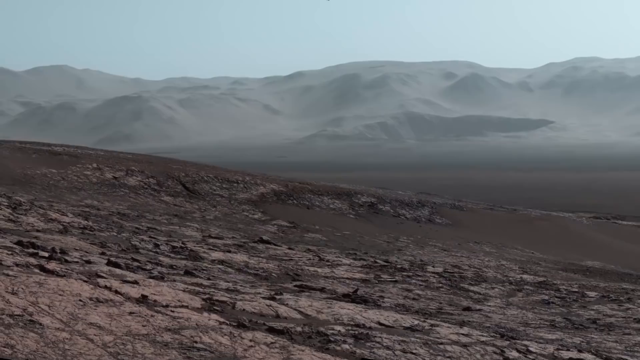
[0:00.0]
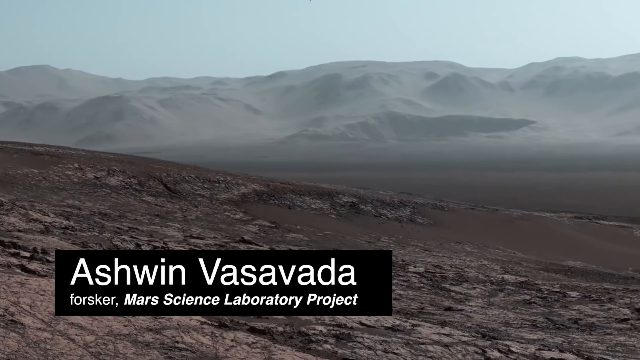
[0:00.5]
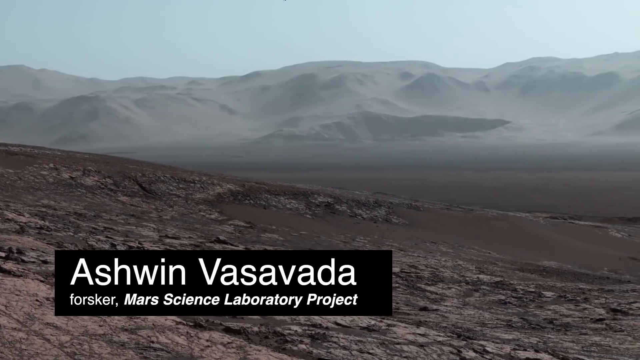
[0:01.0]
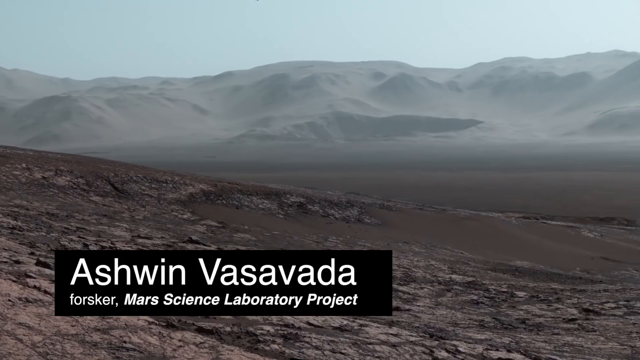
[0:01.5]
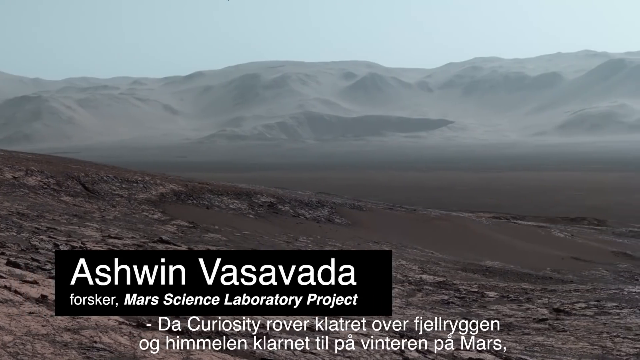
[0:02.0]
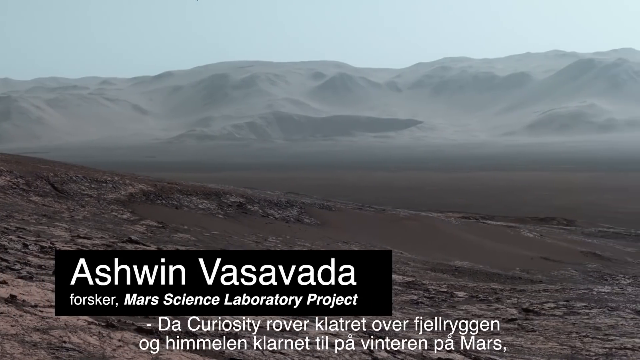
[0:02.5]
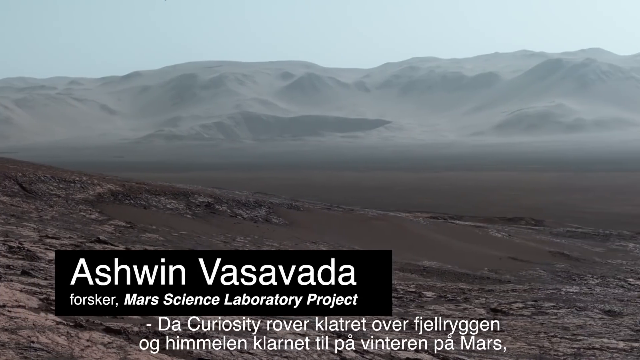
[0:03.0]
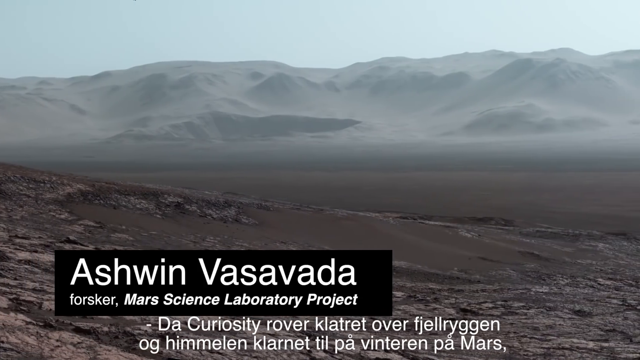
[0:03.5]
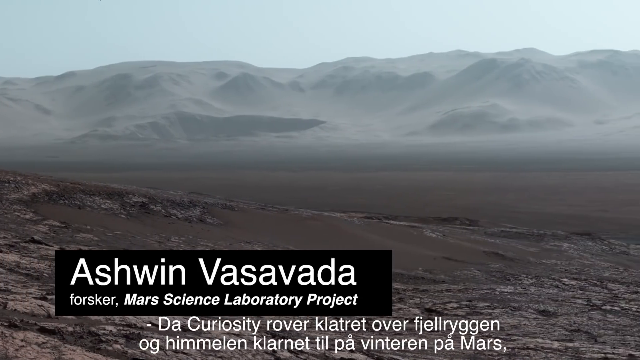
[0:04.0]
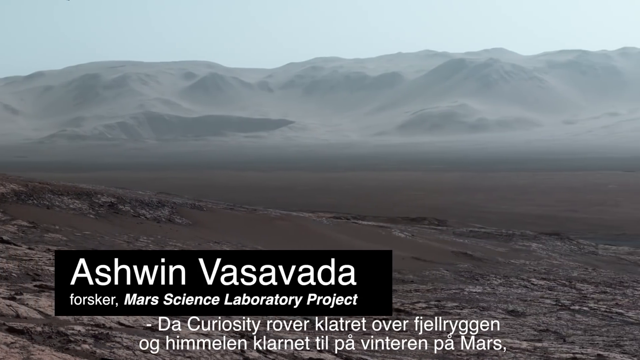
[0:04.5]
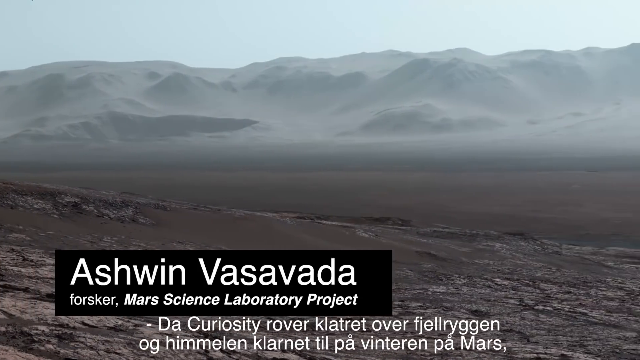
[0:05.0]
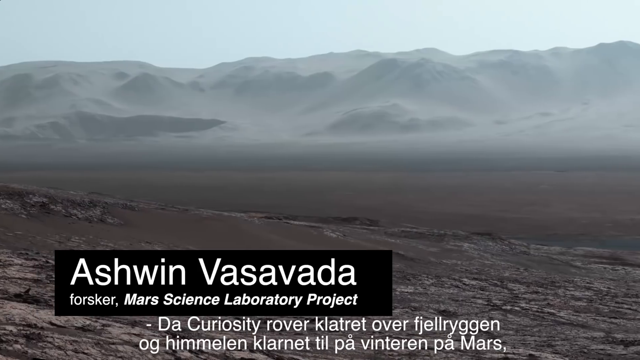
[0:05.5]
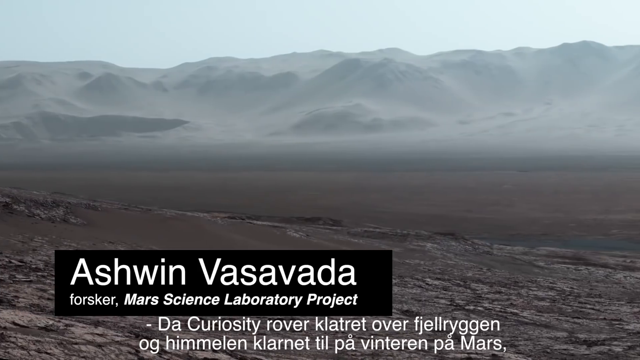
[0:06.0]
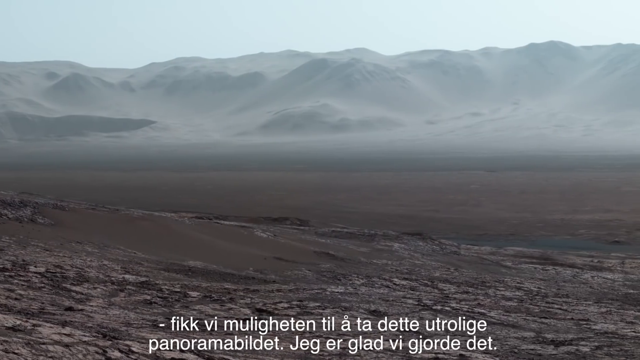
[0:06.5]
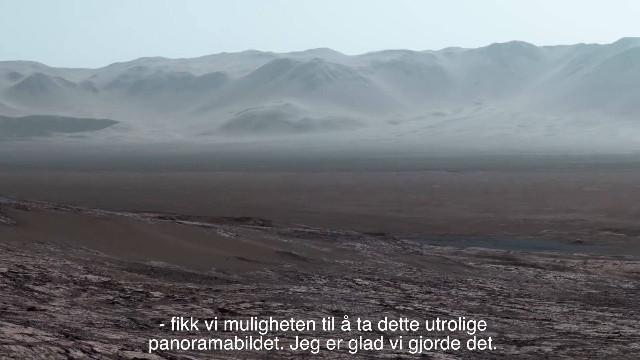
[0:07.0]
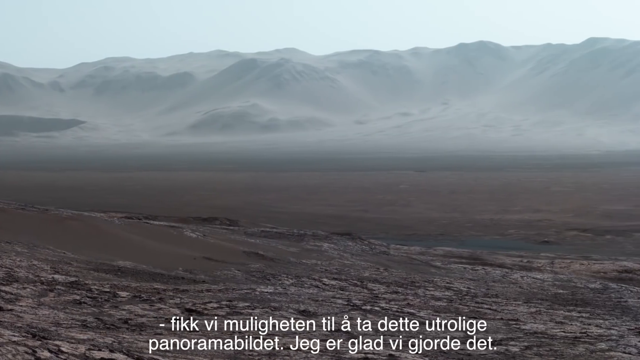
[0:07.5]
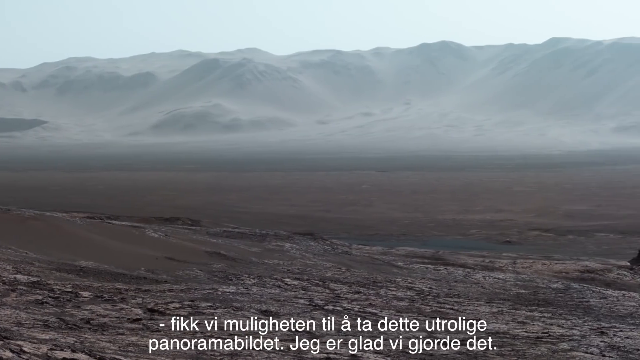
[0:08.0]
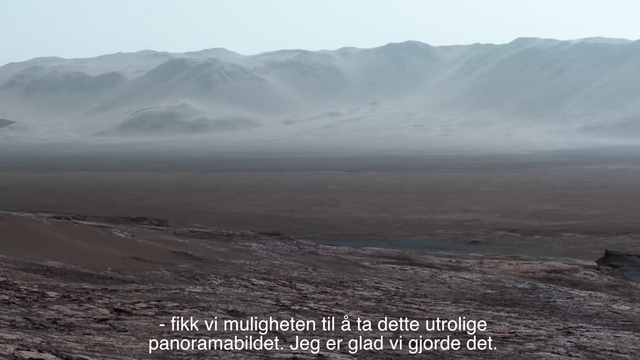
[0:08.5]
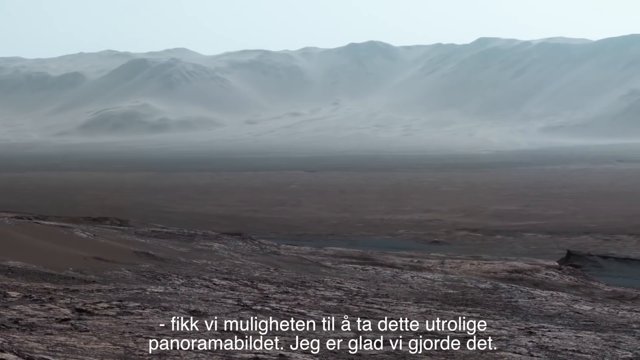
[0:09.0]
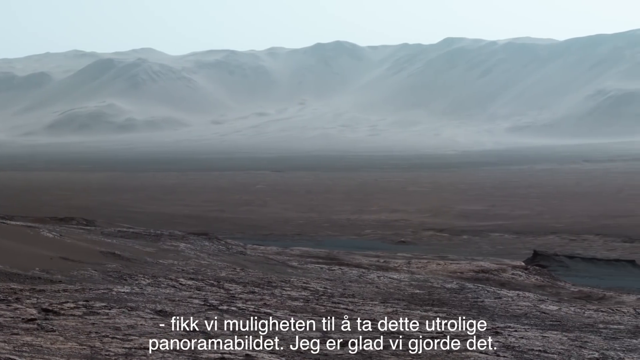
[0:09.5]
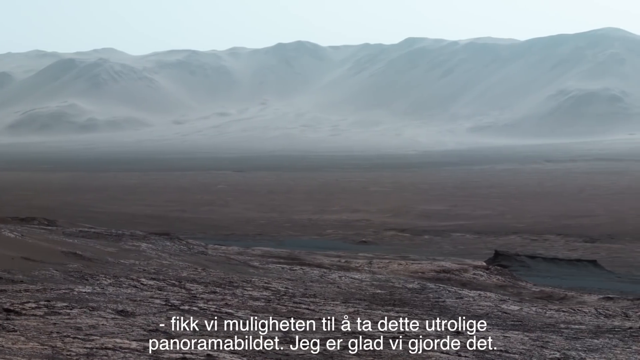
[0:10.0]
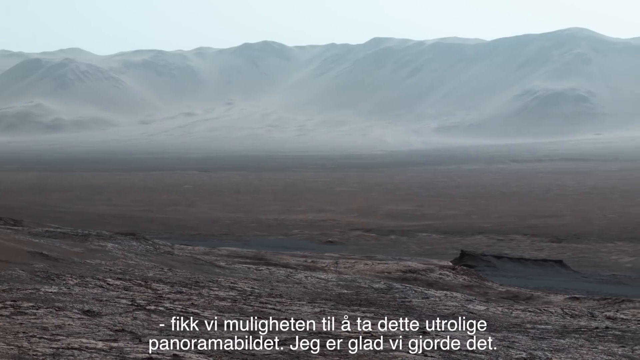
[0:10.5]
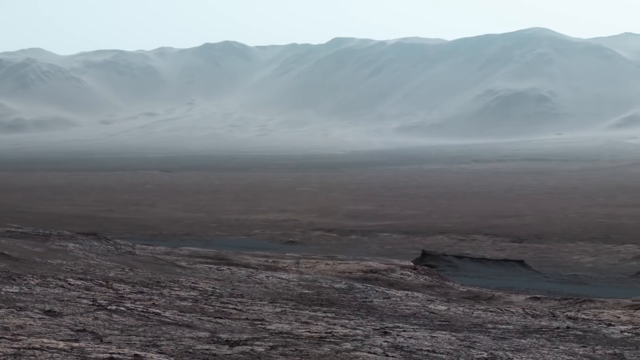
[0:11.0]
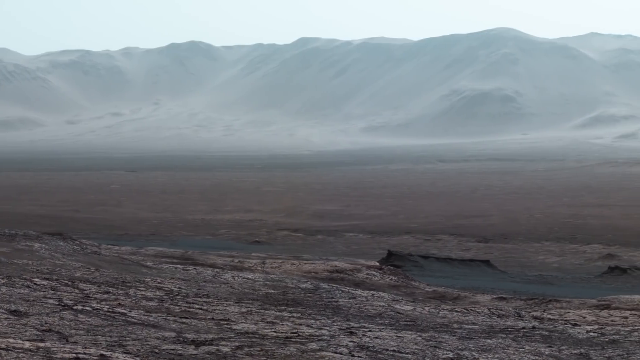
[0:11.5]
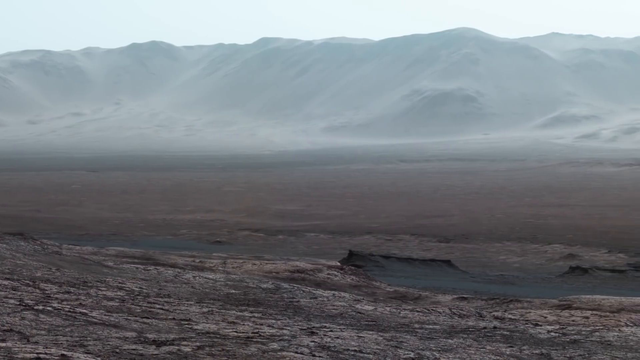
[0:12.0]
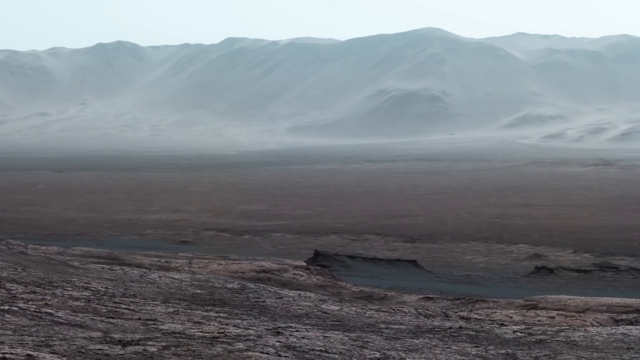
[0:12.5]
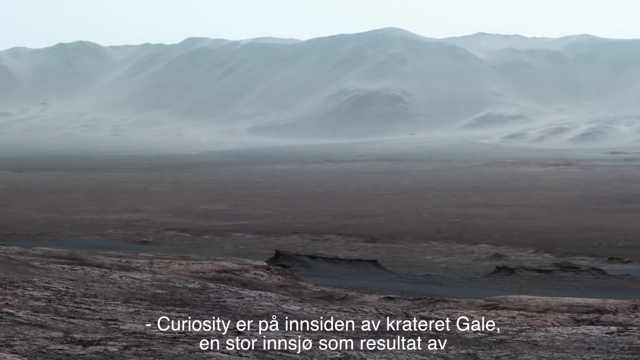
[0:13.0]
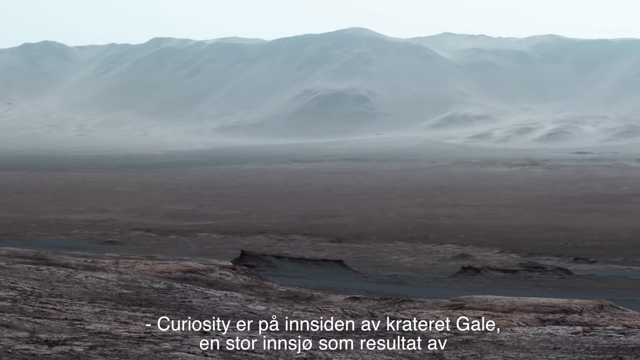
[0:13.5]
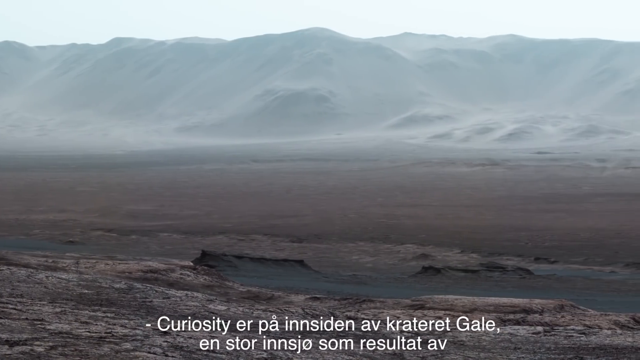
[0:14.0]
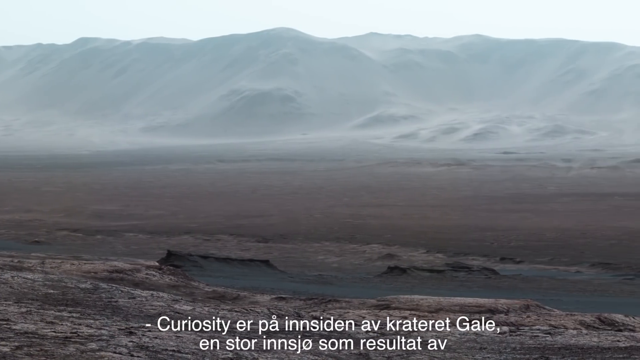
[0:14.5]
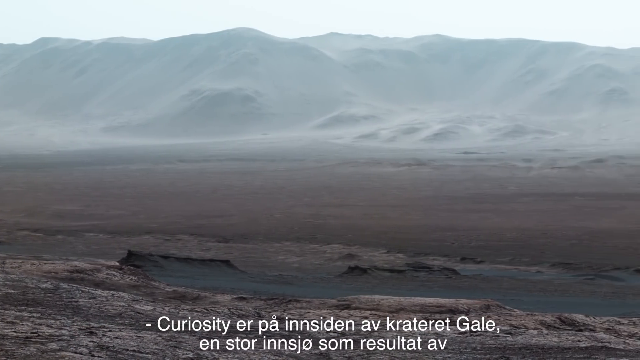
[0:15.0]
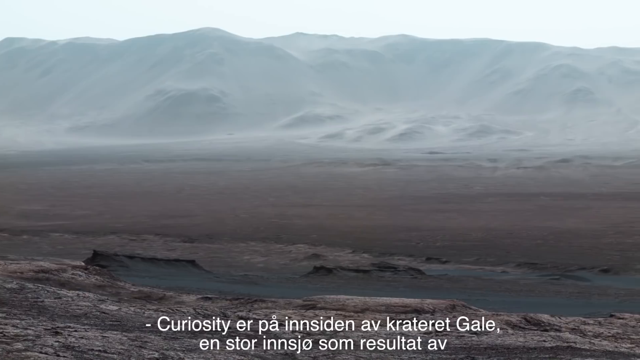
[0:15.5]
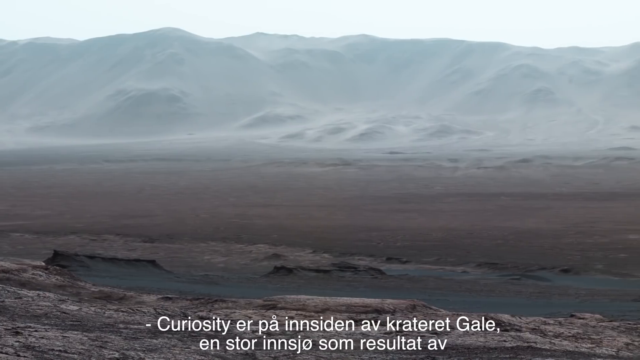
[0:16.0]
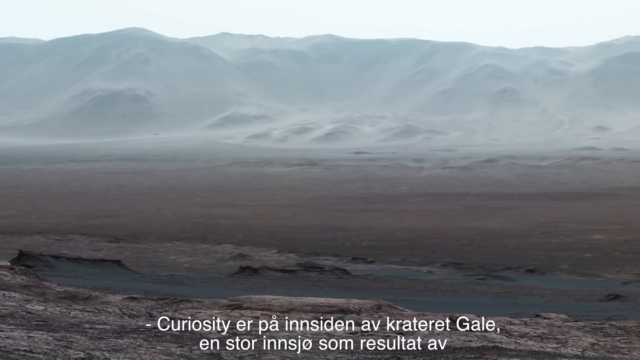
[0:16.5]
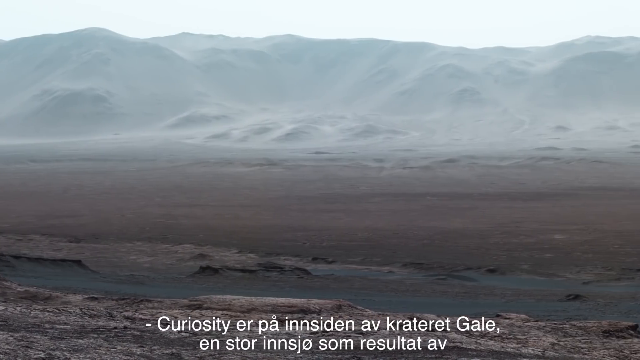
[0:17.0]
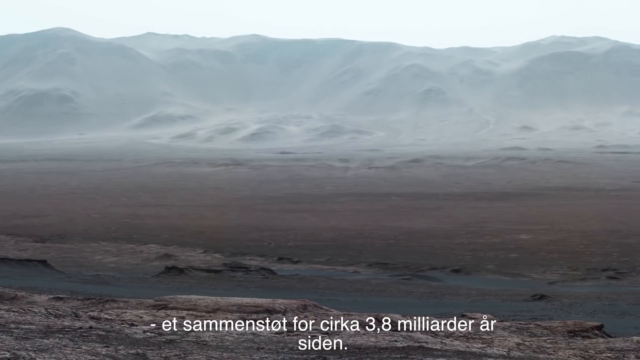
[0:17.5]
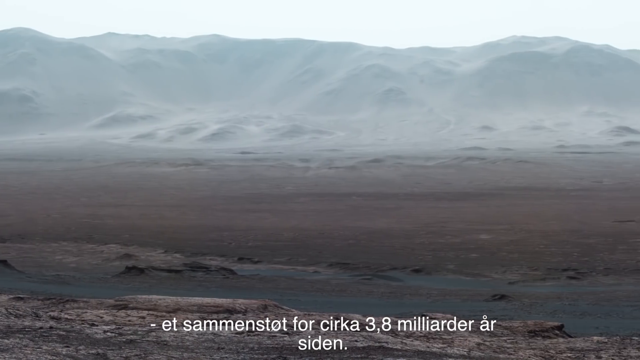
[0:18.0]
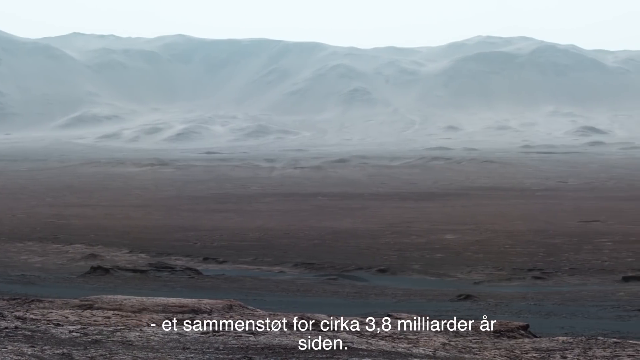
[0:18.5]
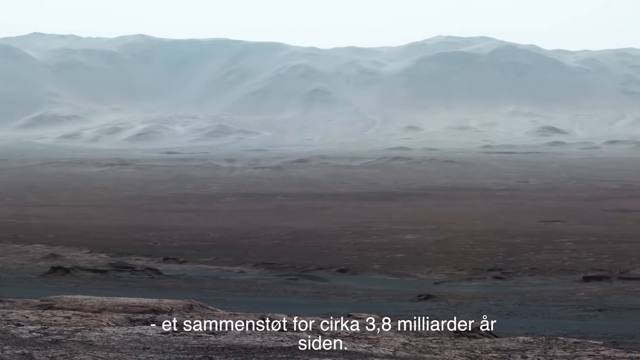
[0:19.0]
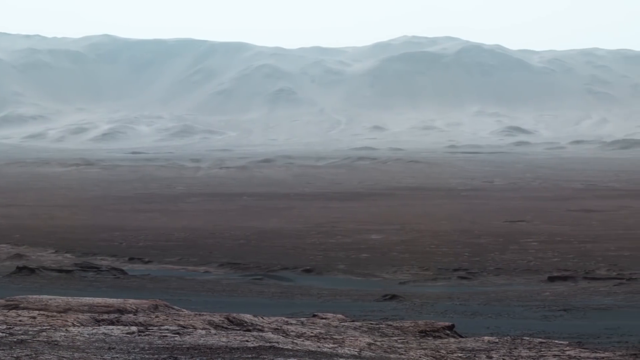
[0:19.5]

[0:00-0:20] A mountainous area appears, with ground covered in dirt, mud and water, and a bit of what seems to be mist or fog under a slightly blue sky. The camera moves to the right, and a black box with white text reads "Ashwin Vasaveda Forsker Mars Science Laboratory Project". White text in another language pops up at the bottom of the screen, with English beneath it. The camera continues moving right, revealing more of the mountainous area, which has some white and blue color to it. Some areas of the ground look like they have holes in them, and the white text keeps popping up on the screen. The mountains have almost an ashy color, and there are many patchy areas on the ground.